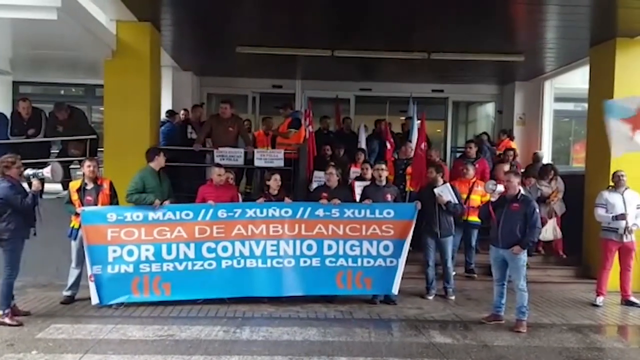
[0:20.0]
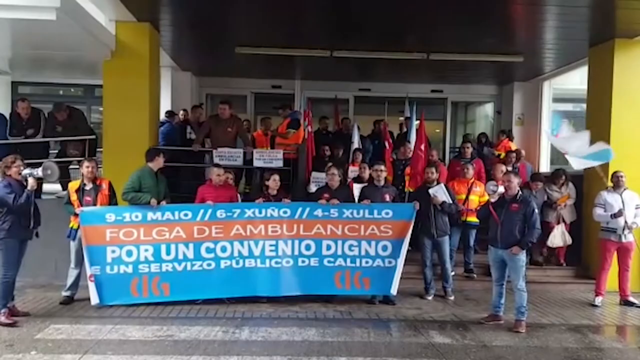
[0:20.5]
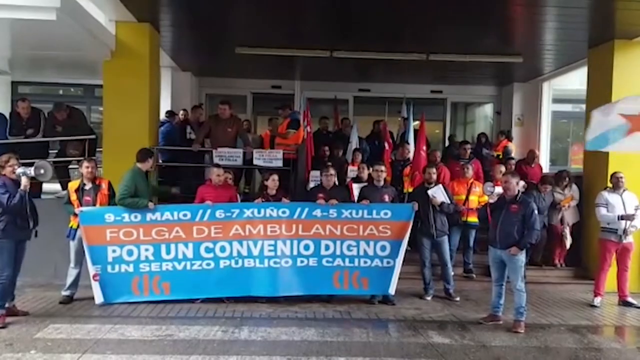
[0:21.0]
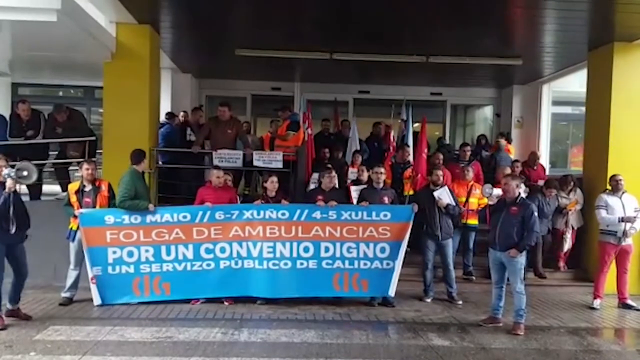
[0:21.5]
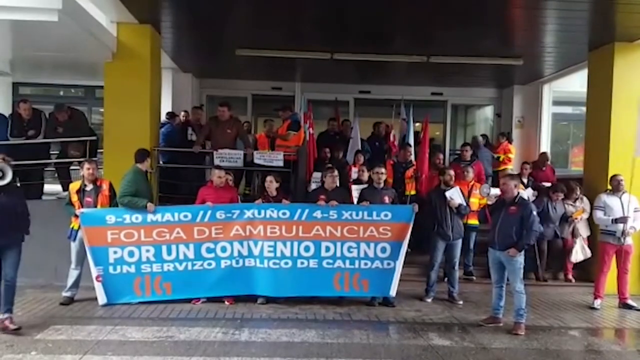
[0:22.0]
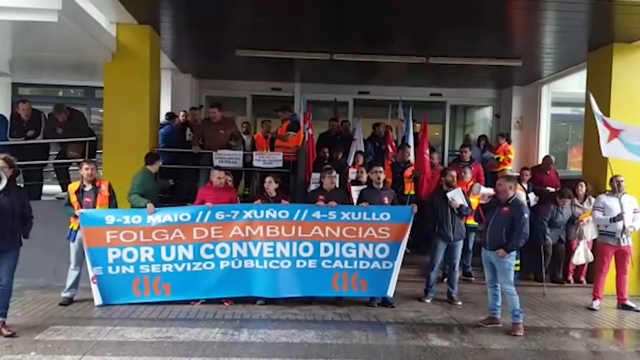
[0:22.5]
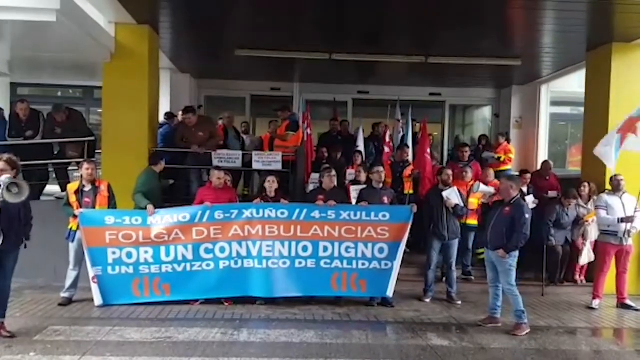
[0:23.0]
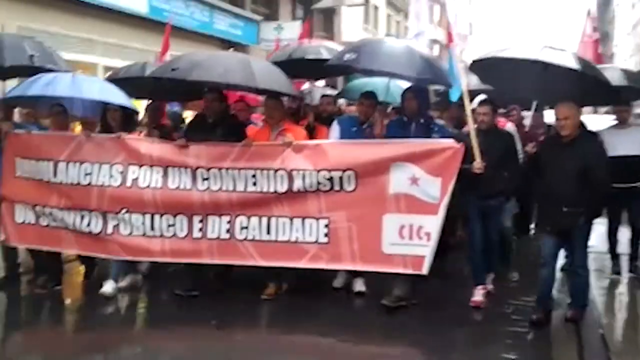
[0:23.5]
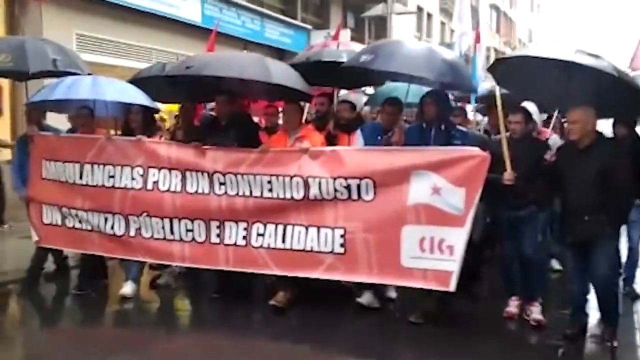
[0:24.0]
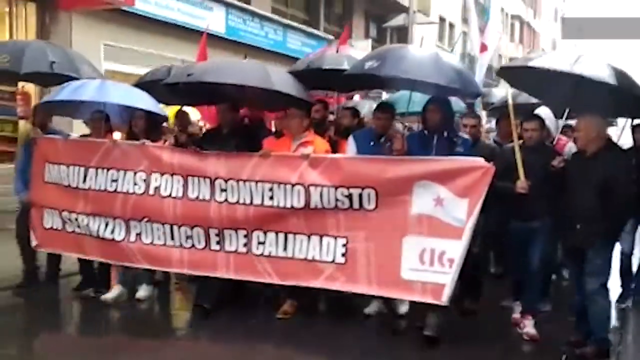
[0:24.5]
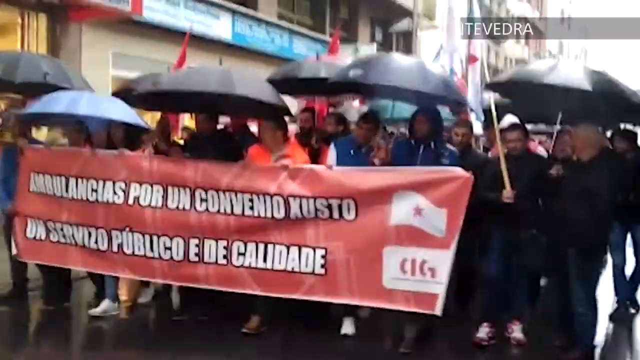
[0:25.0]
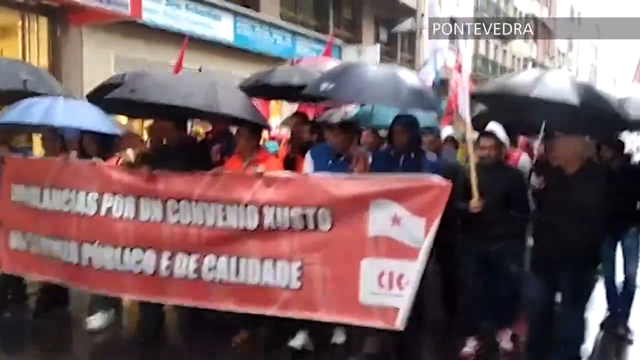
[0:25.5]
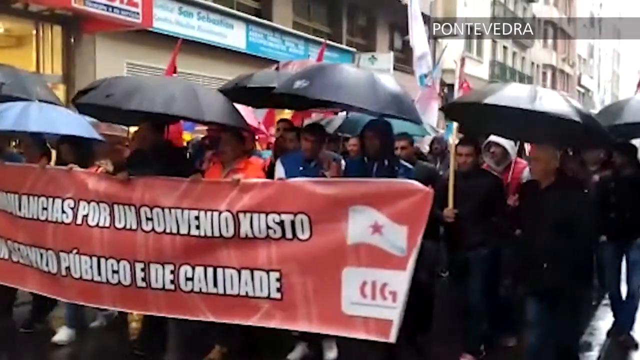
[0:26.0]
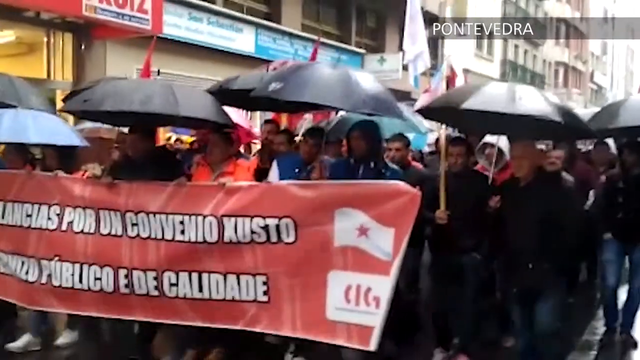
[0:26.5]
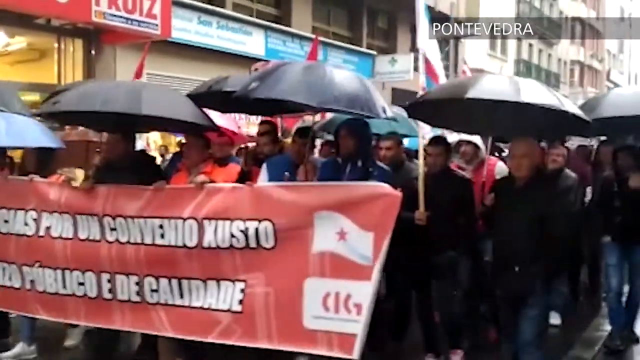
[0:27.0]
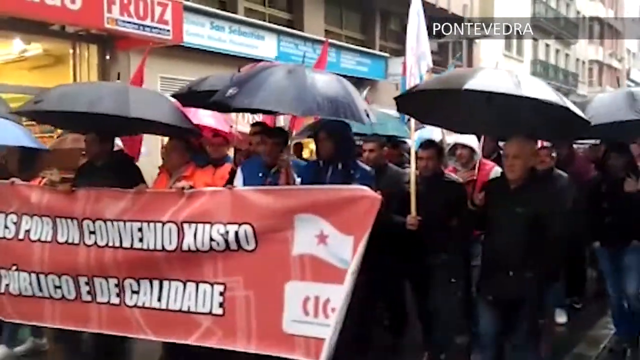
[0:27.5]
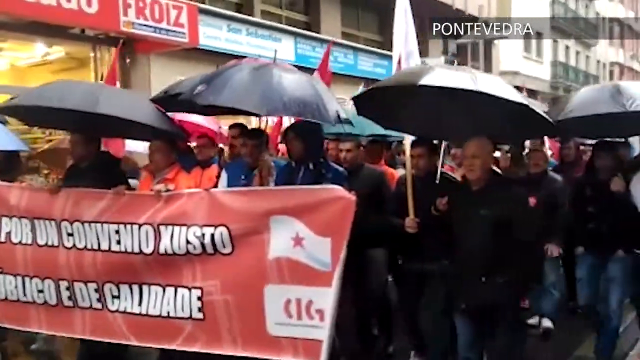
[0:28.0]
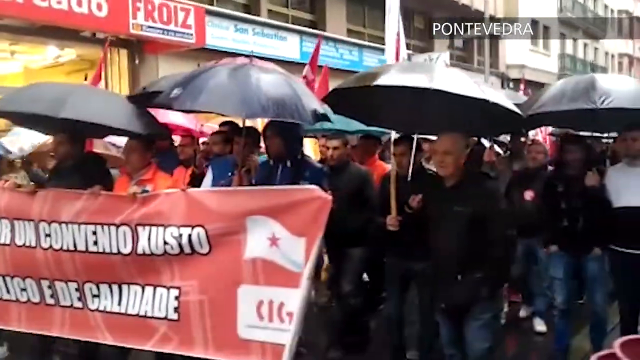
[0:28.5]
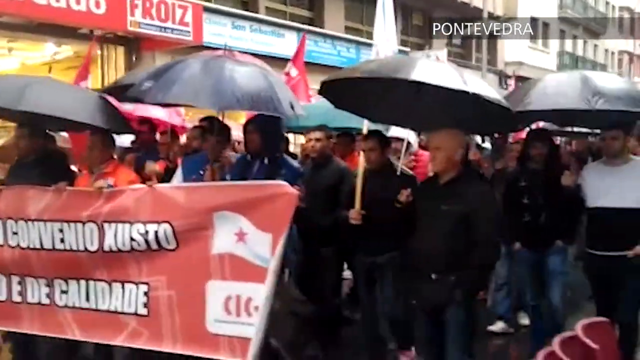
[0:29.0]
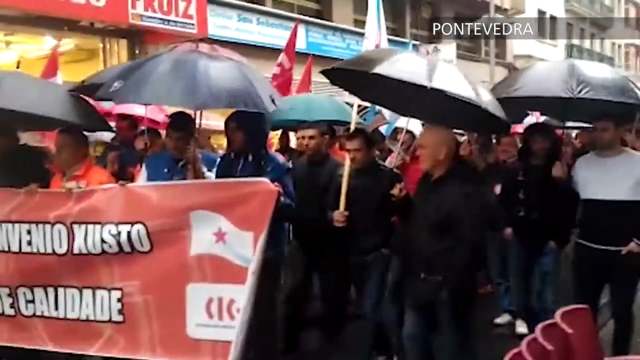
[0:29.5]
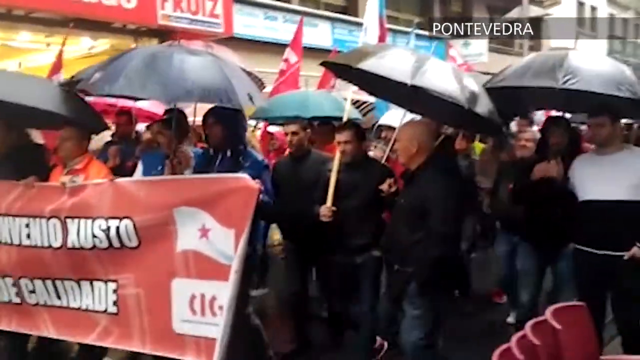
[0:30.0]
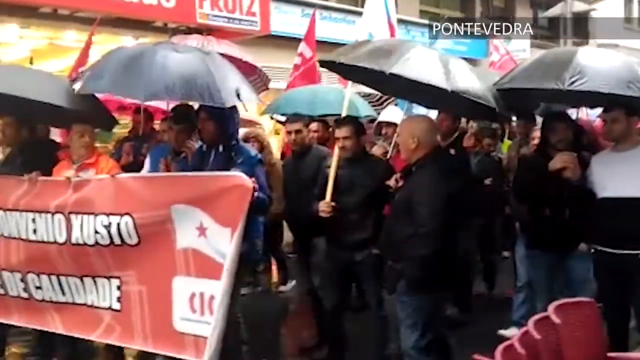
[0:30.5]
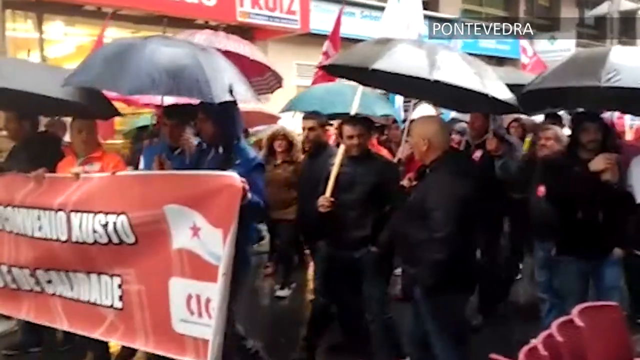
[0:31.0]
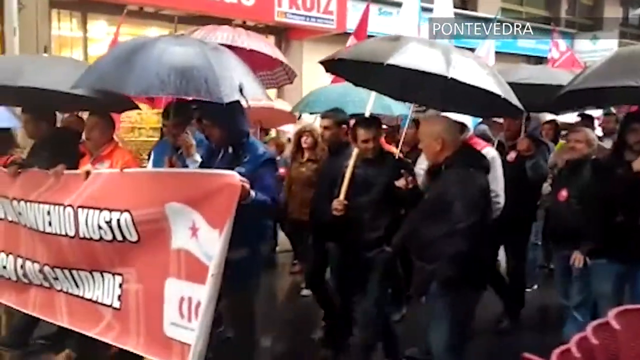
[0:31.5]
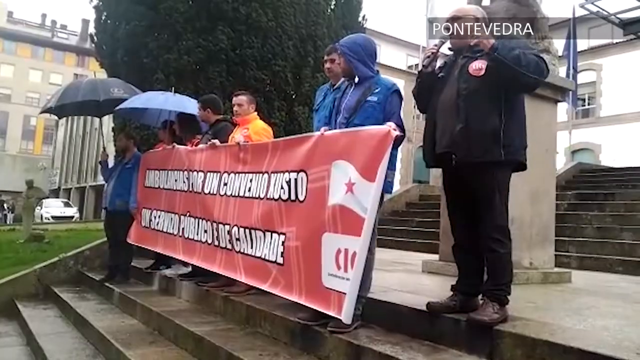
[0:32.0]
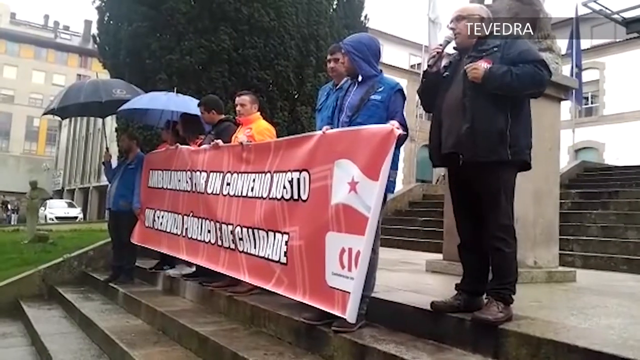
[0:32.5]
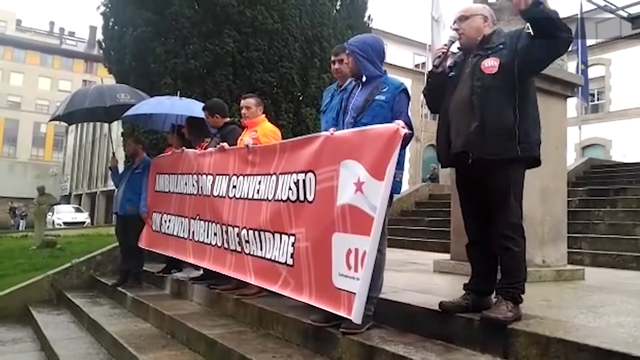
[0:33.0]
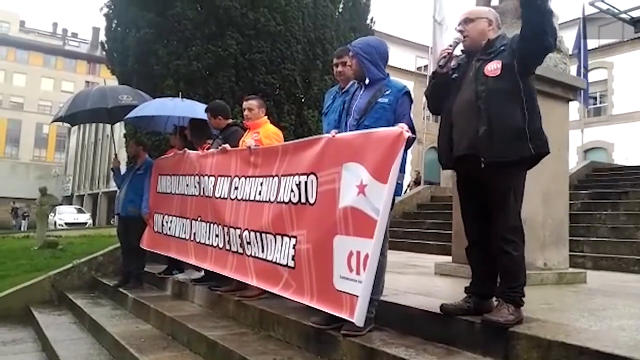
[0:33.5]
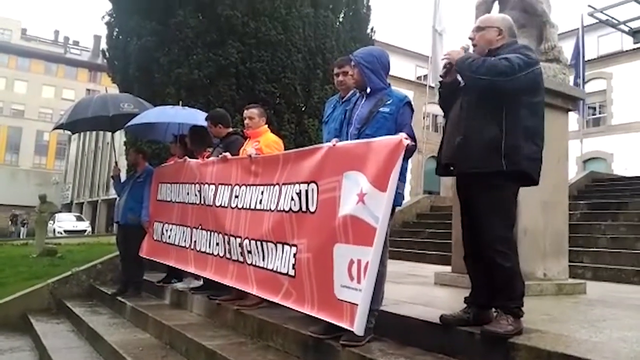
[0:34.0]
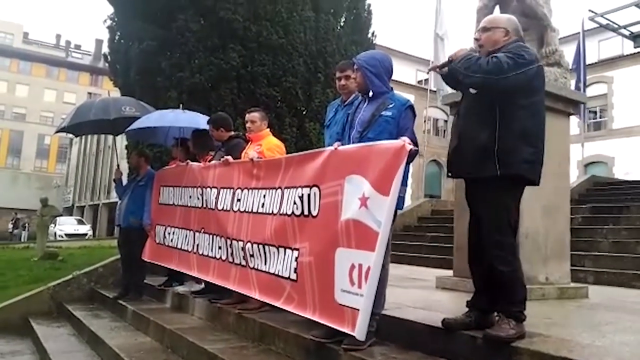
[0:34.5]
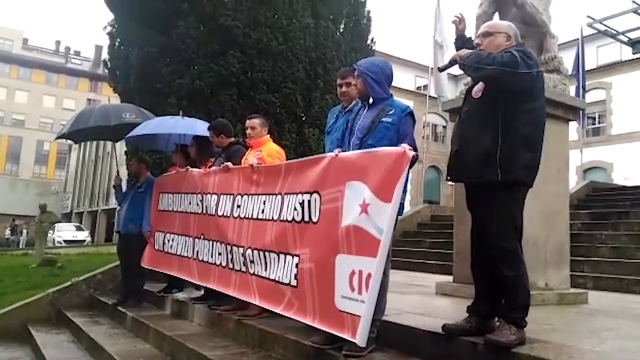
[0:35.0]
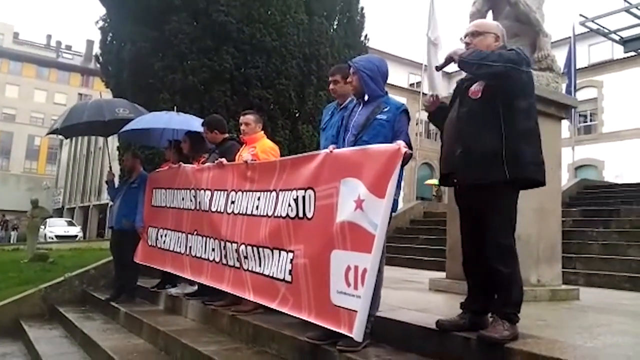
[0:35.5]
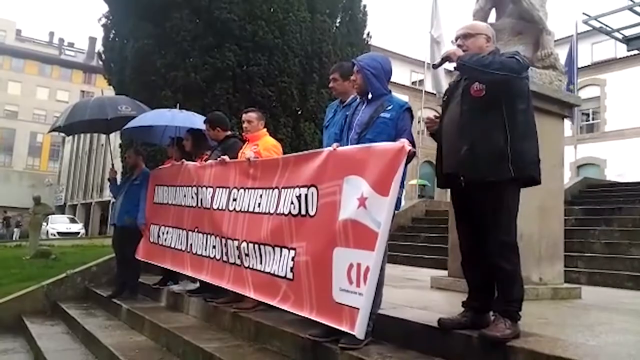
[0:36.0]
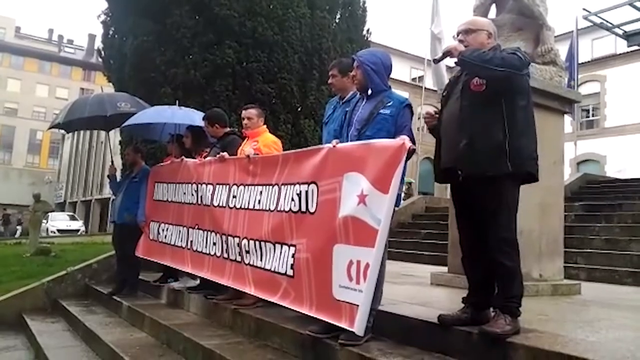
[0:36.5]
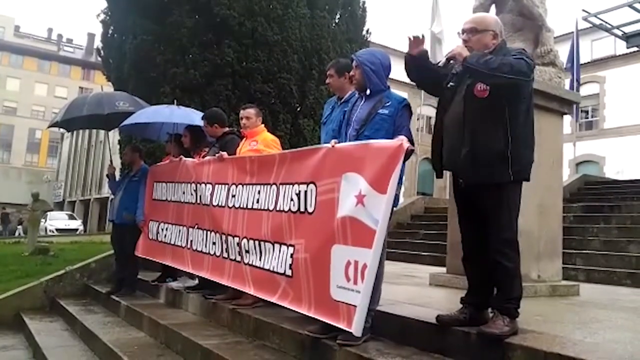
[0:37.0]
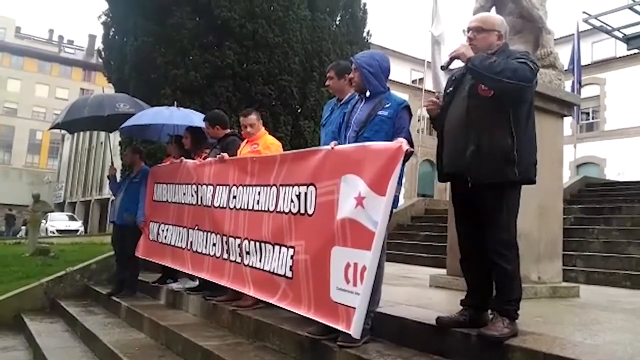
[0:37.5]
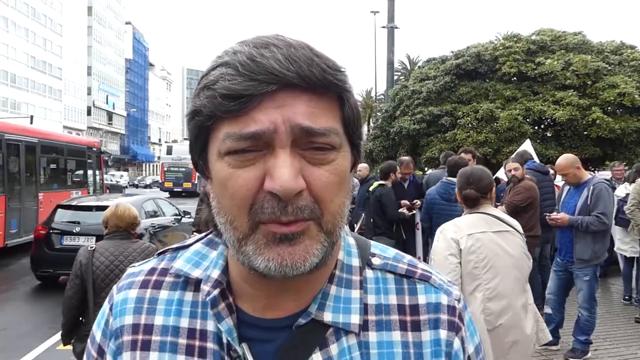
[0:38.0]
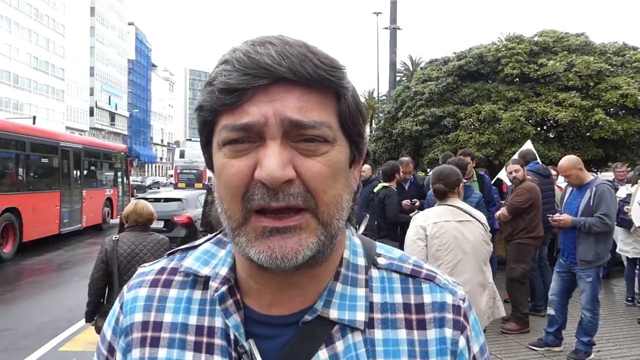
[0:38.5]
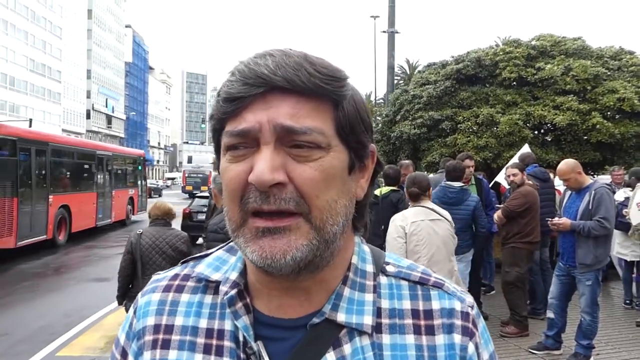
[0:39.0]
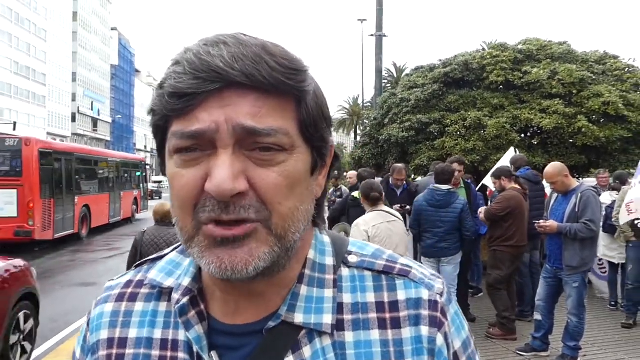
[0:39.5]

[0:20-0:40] A news story covers a demonstration. A number of people, maybe around 30 to 40, have gathered in the entranceway of a building; the weather is quite bad, so many of them are under cover. There is a big blue and red banner that mentions something about ambulances, and a woman on the left holds a loud hailer. A man wearing orange trousers waves a light blue and white flag with a red star in the middle. The camera then cuts to a walking demonstration of a big crowd. The front row carries a large red banner, and 10 big golfing umbrellas are visible; it is raining, so most of the demonstrators are under umbrellas. They are bunched close together and walk past the camera. The scene then changes to 8 people, 6 men and 2 women, standing at the top of some stone steps in front of a building, with a big pillar topped by a stone lion behind them.